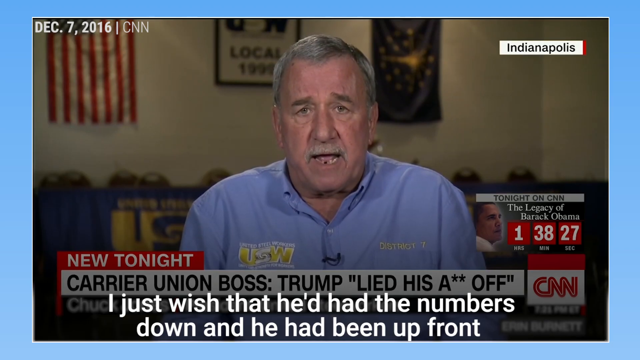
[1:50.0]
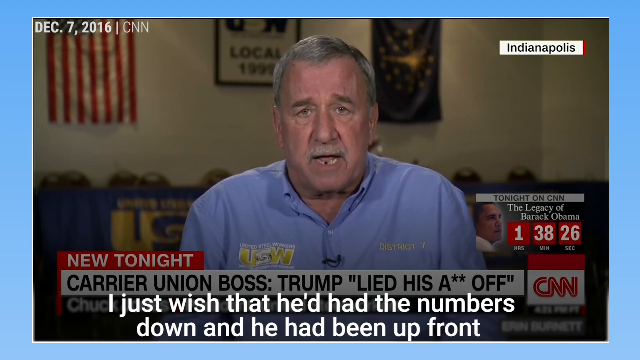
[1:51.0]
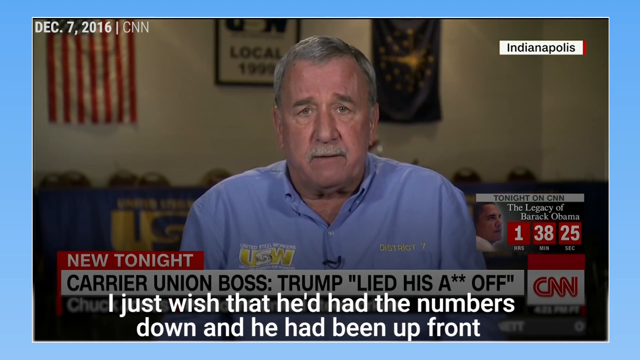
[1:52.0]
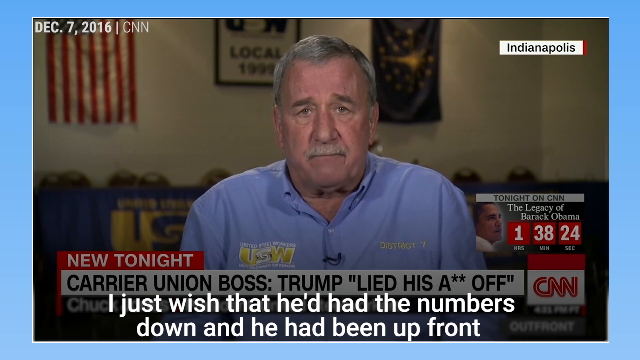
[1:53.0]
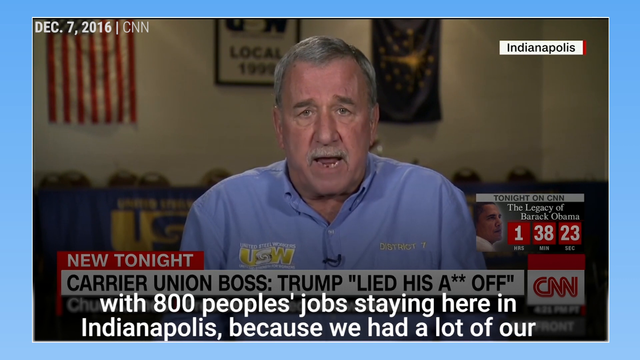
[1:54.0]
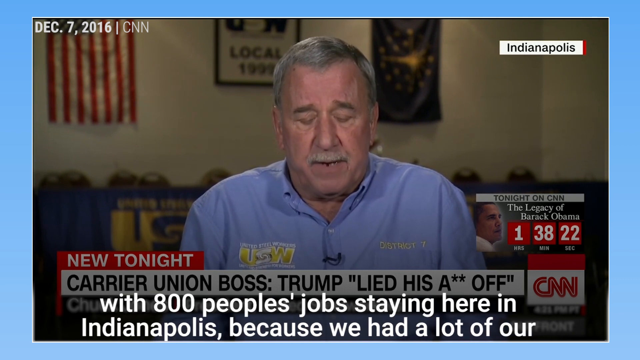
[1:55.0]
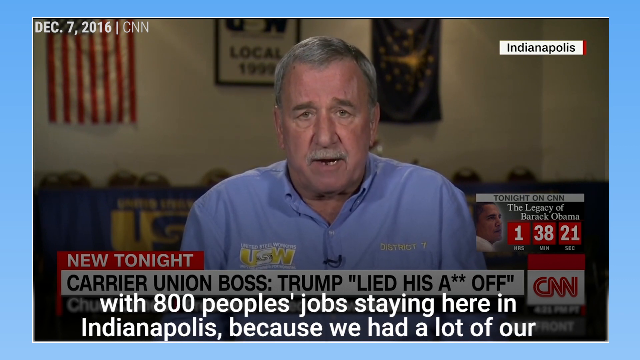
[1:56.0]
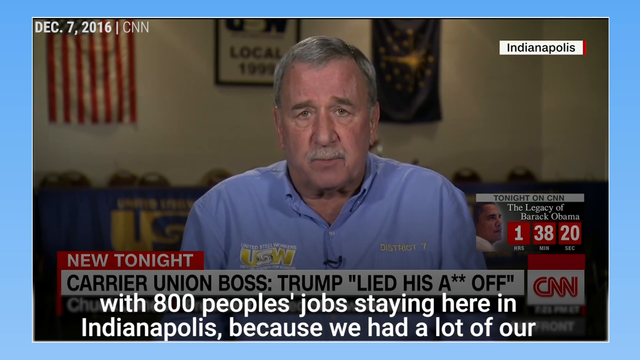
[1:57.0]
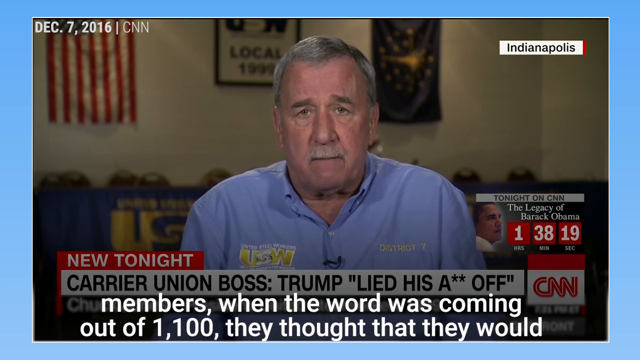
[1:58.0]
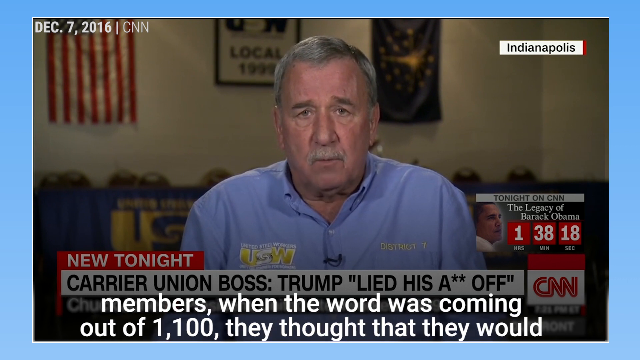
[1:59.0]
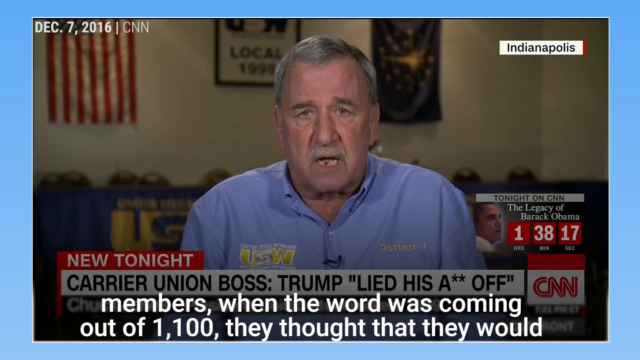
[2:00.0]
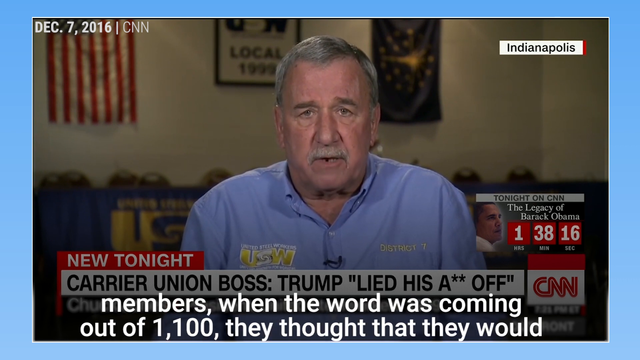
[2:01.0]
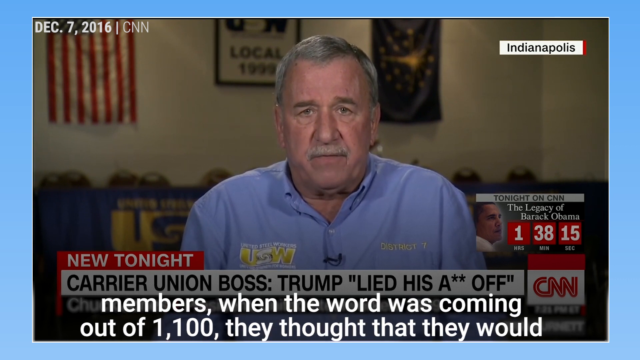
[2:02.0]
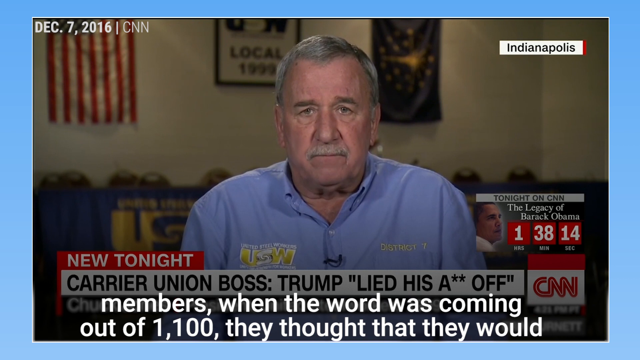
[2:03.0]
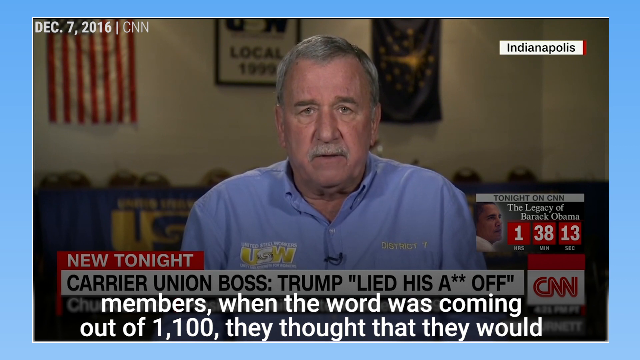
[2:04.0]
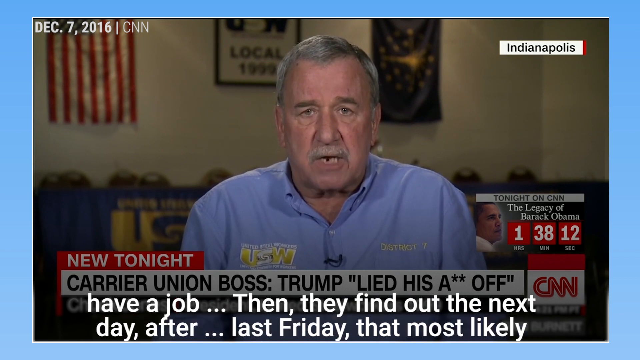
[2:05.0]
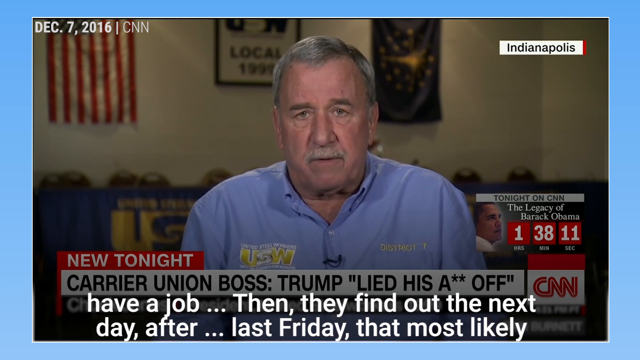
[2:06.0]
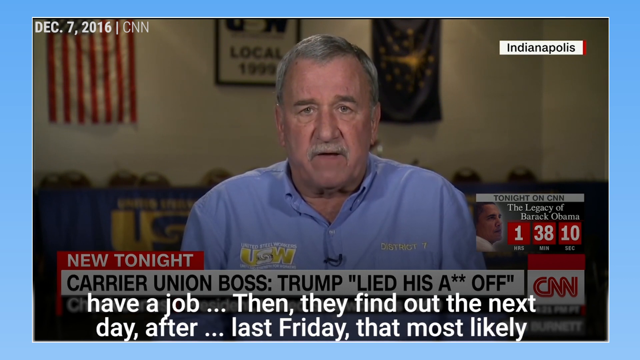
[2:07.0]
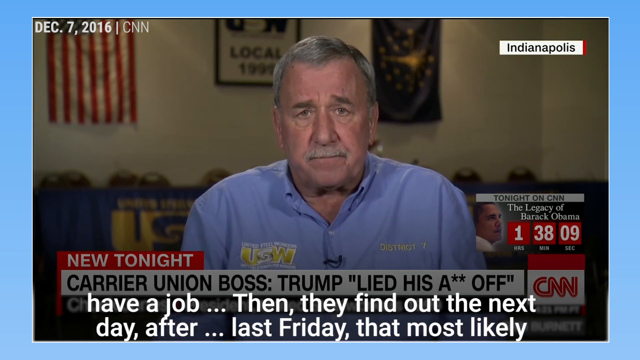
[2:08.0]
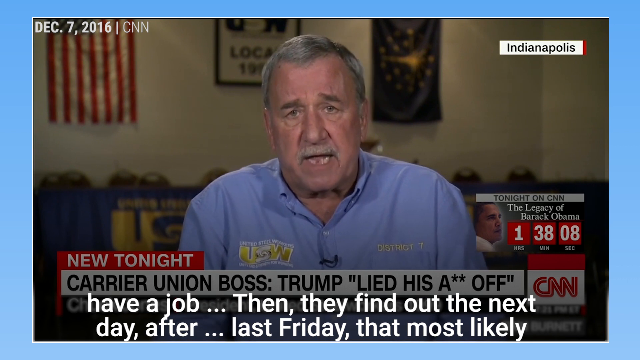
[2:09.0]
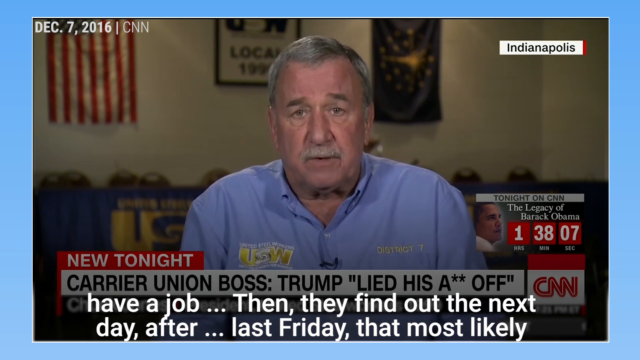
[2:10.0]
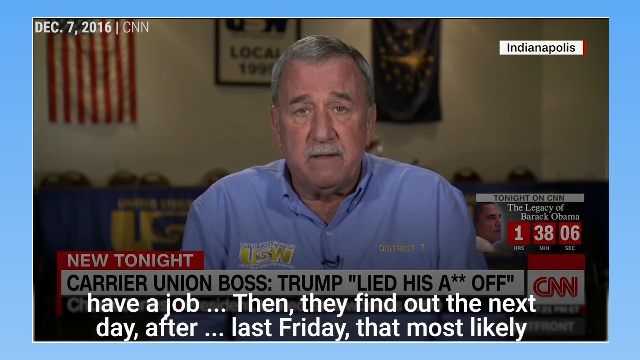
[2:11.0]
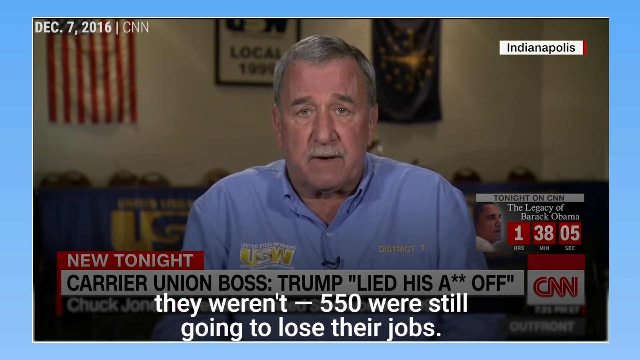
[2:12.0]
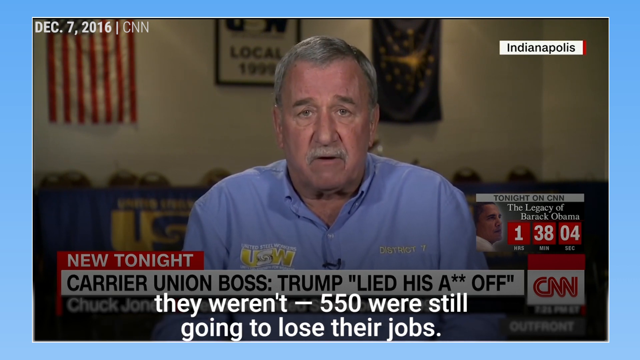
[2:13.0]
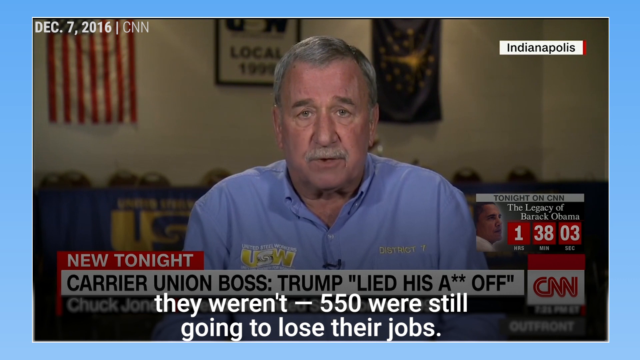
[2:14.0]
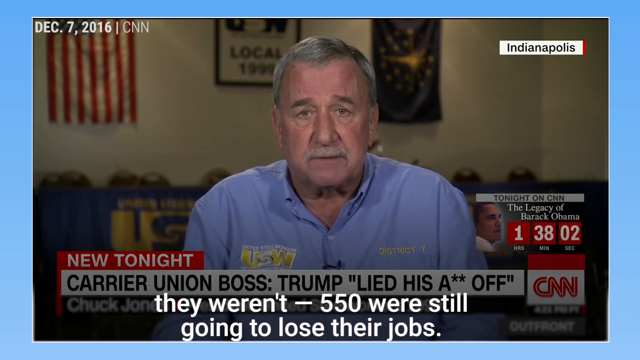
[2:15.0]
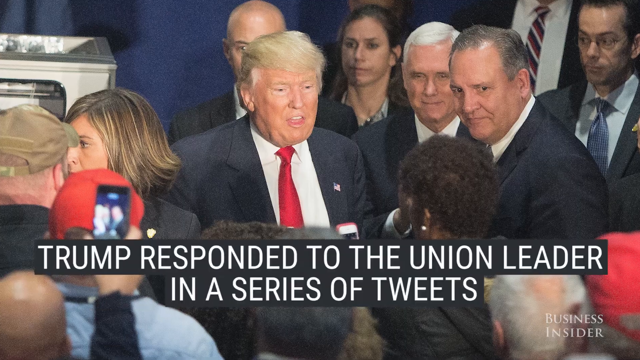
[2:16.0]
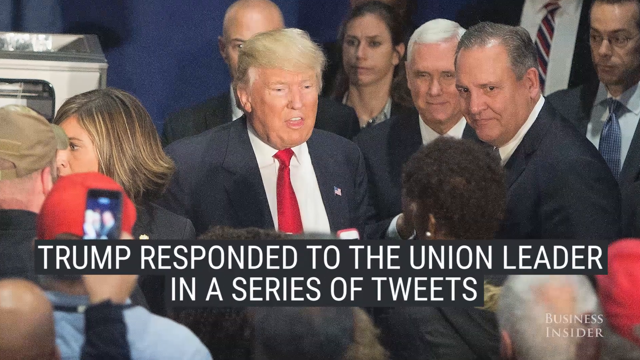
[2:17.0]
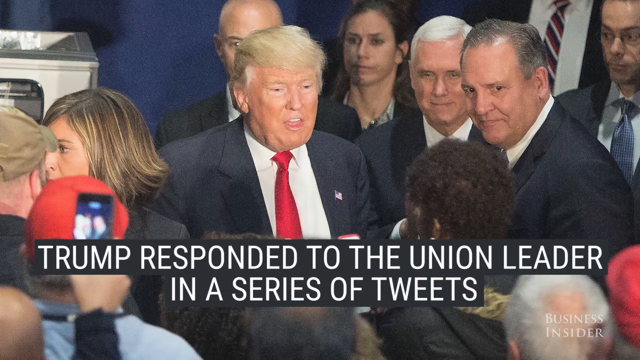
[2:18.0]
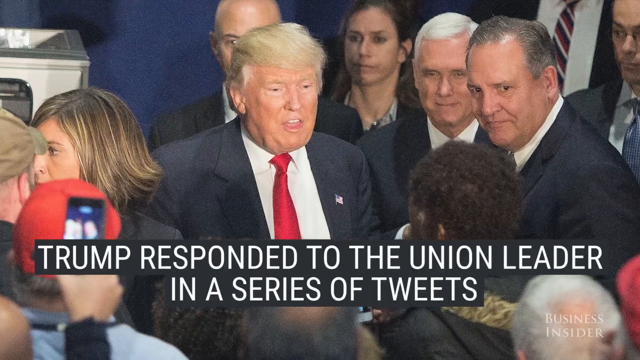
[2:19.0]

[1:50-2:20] After a cut, white text quotes the union boss about Carrier announcing the close down of the whole facility in February. A full-size image of the union boss speaking follows, with "USW" on the top left of his collared shirt. More text continues: "the research and development jobs, about 350 of them were going to remain here in Indianapolis," and "the actual number of jobs saved is 730 bargain unit jobs, the workers of the union members," plus "another 70 office, supervisory clerk workers from the management." As he speaks, he appears displeased and angry, his face red. What appears to be an office banner reads "Local 1999," and on the far left is a United States flag in red, white and blue with the stars at the top left. More white text continues to appear.